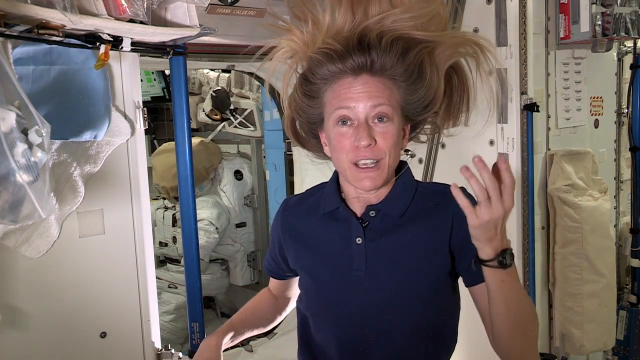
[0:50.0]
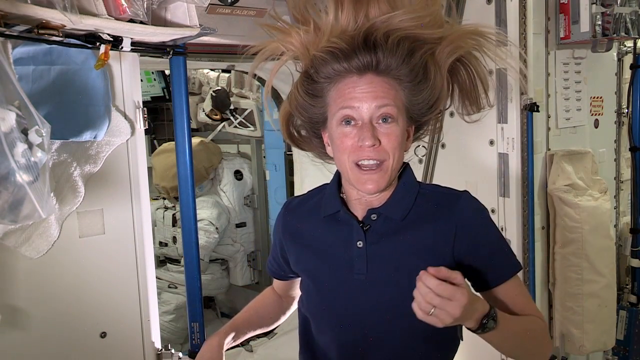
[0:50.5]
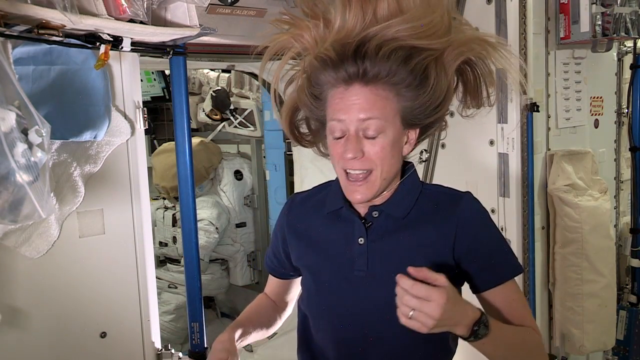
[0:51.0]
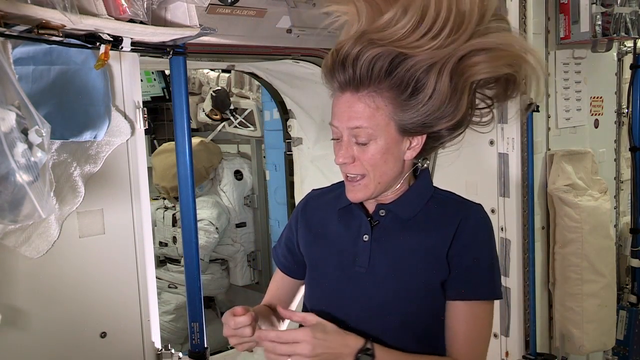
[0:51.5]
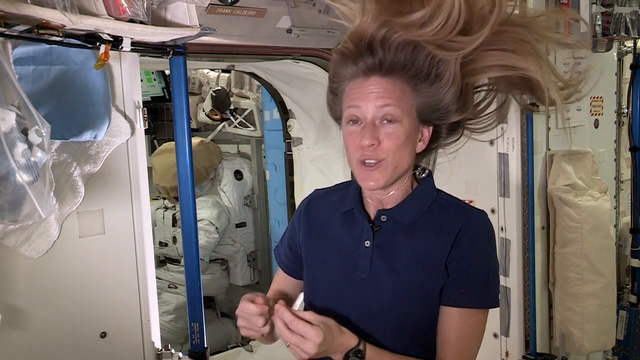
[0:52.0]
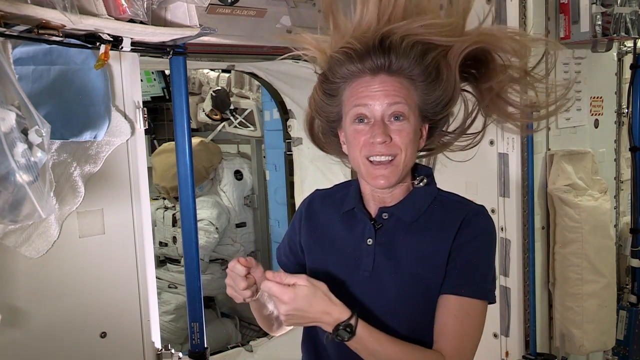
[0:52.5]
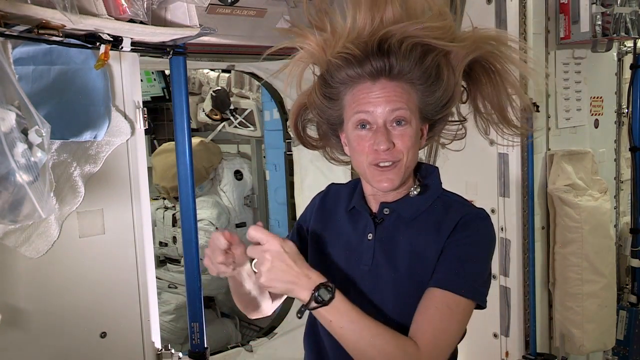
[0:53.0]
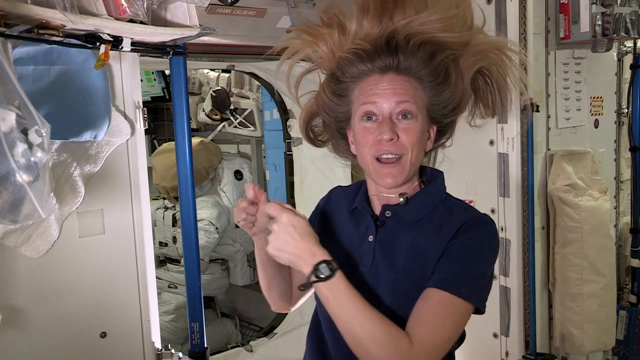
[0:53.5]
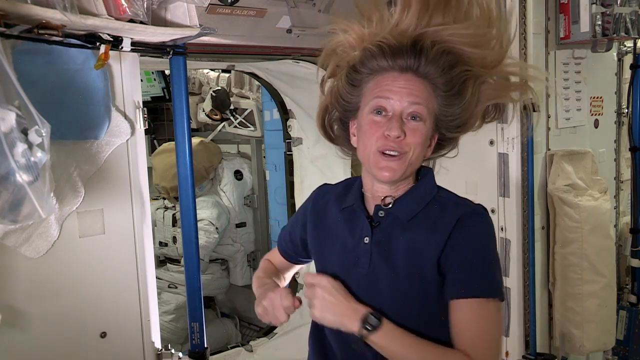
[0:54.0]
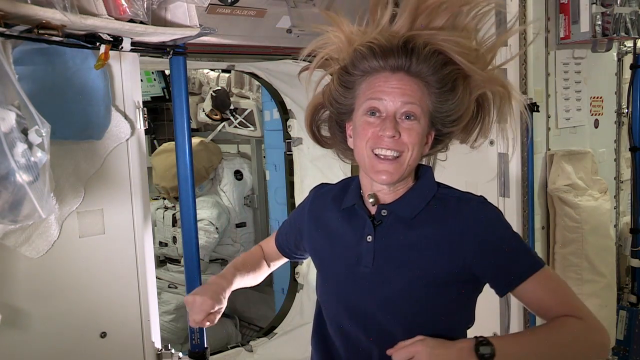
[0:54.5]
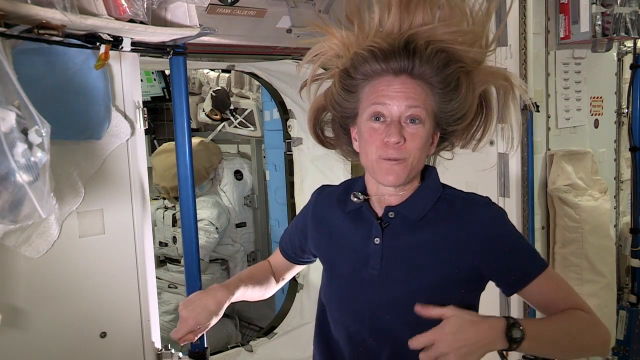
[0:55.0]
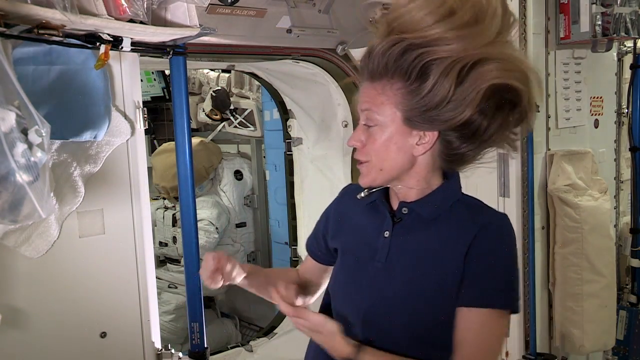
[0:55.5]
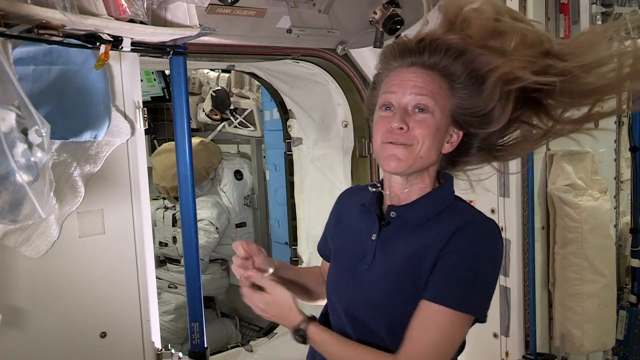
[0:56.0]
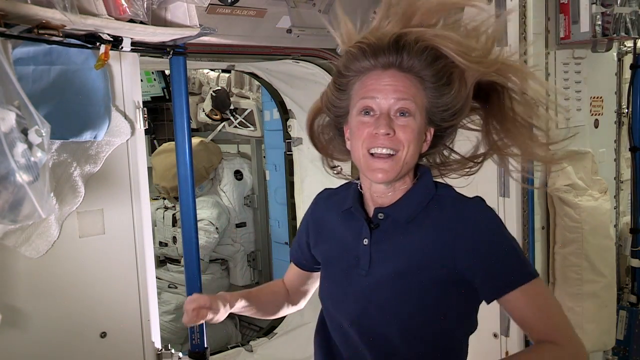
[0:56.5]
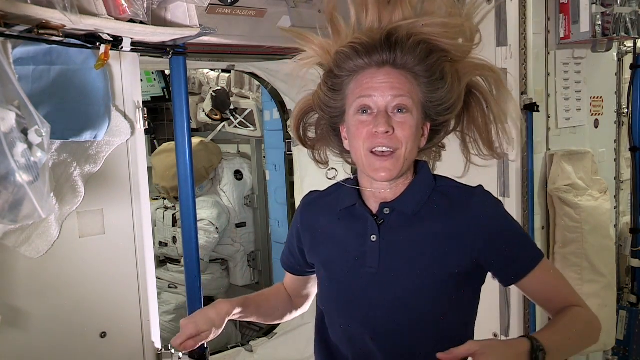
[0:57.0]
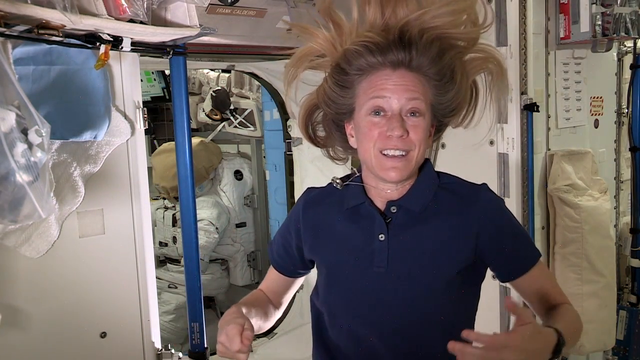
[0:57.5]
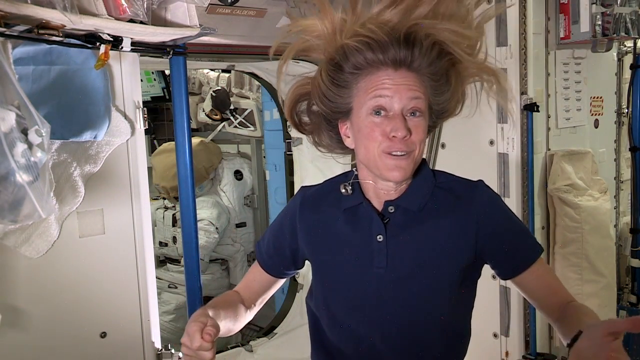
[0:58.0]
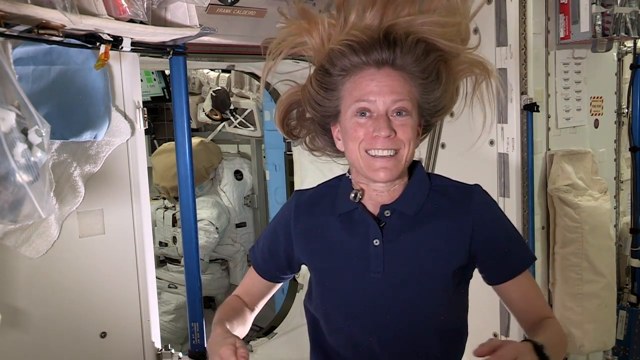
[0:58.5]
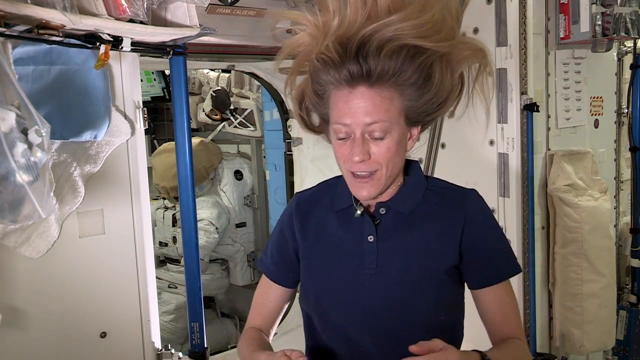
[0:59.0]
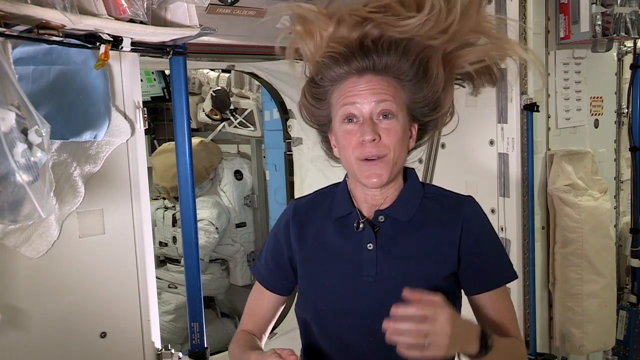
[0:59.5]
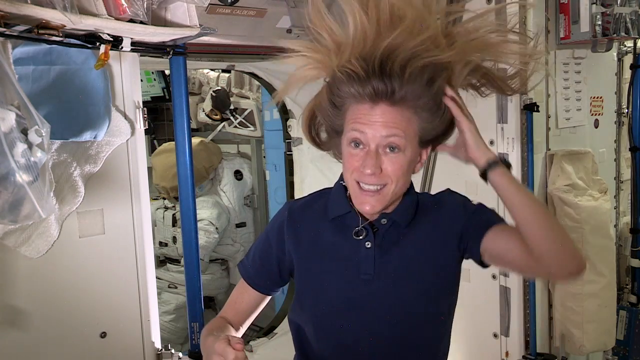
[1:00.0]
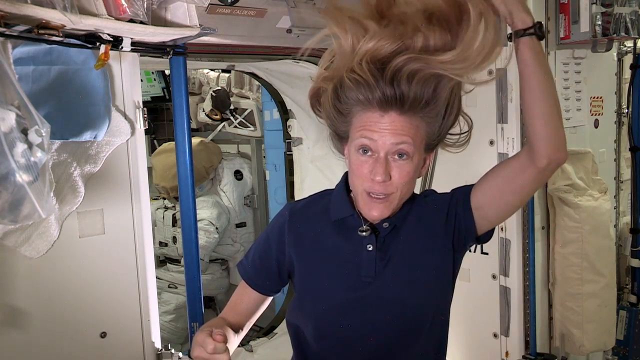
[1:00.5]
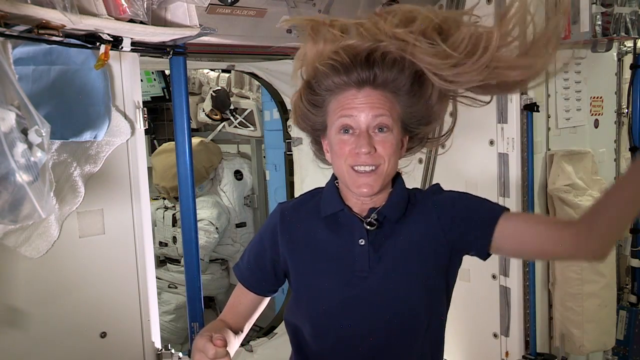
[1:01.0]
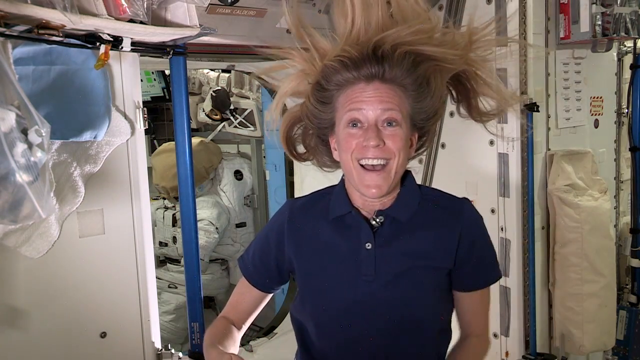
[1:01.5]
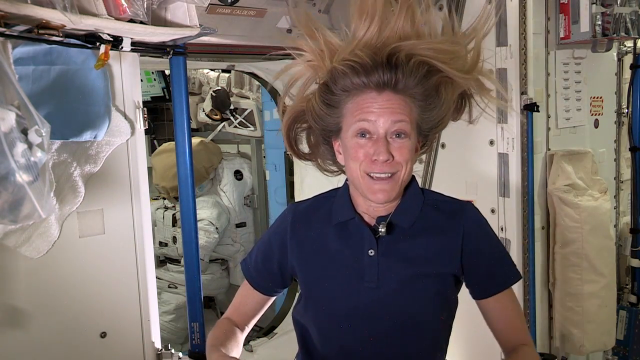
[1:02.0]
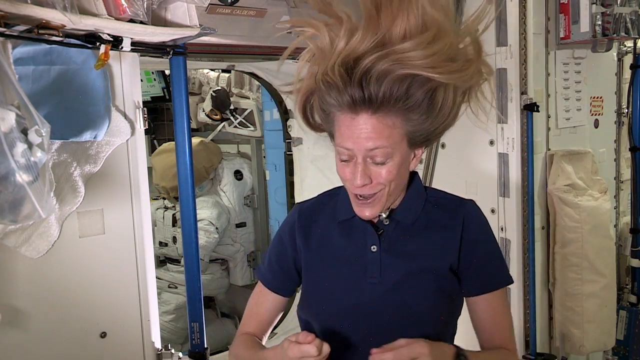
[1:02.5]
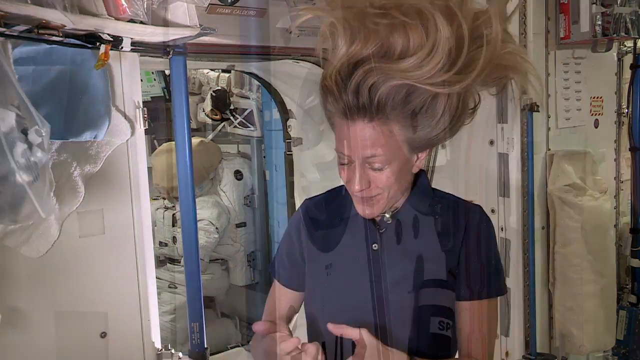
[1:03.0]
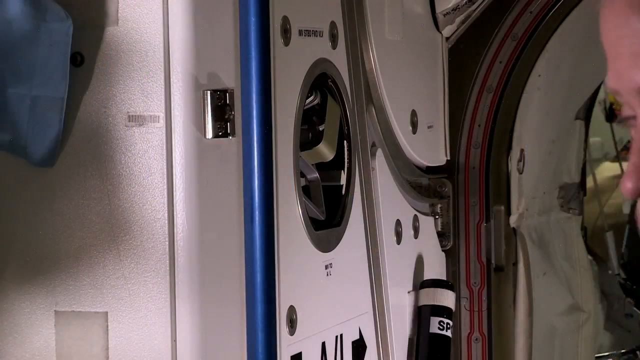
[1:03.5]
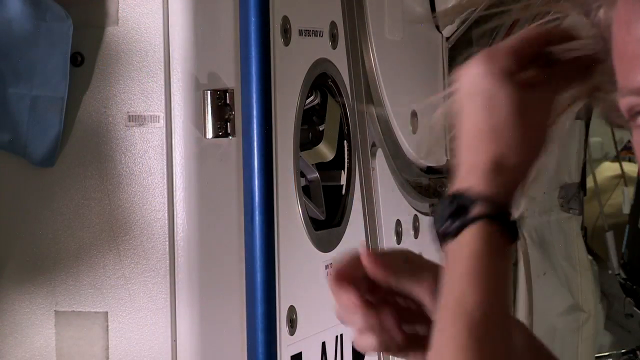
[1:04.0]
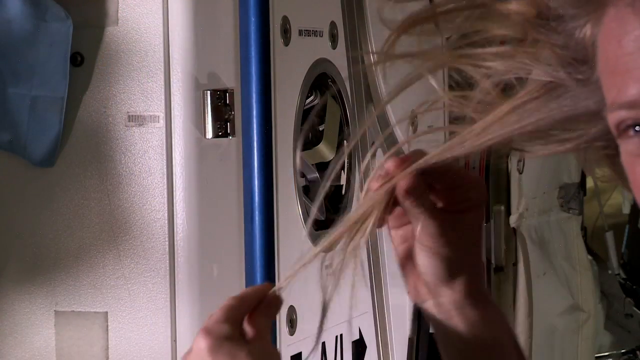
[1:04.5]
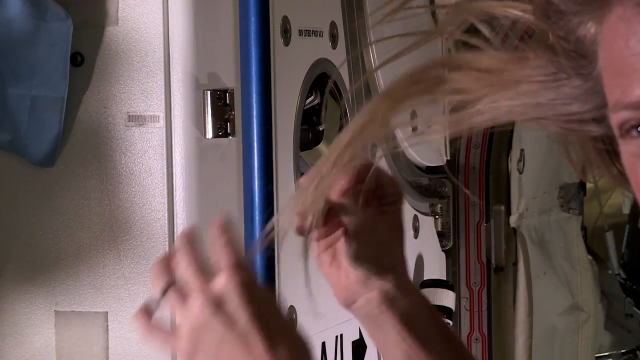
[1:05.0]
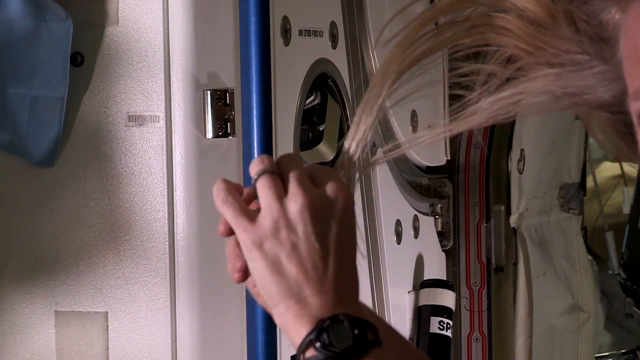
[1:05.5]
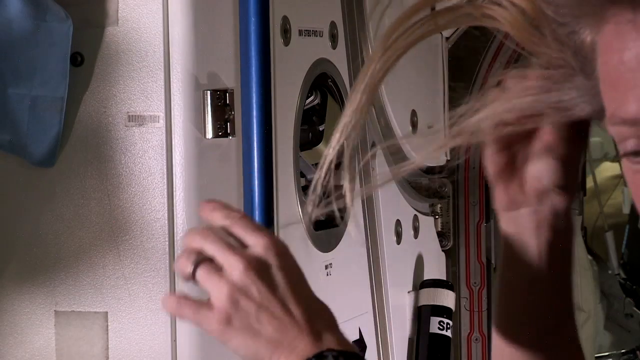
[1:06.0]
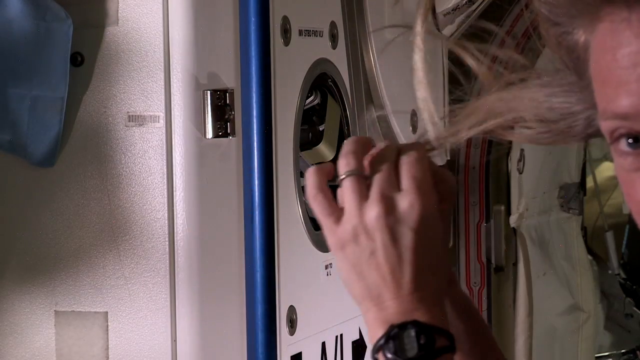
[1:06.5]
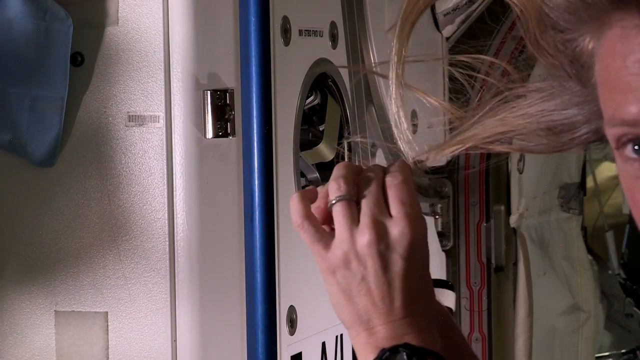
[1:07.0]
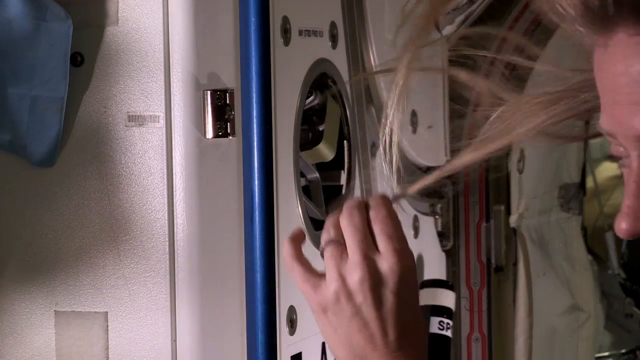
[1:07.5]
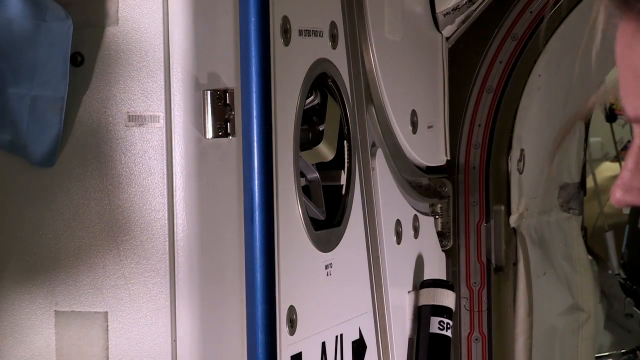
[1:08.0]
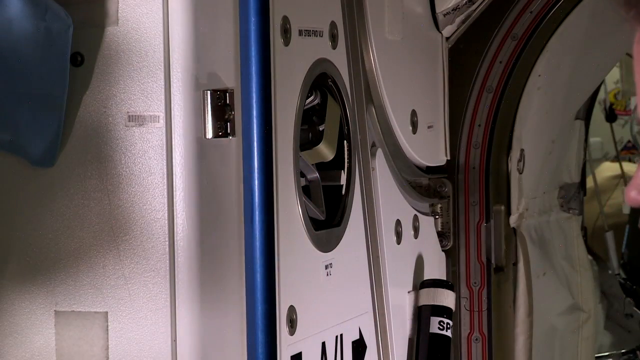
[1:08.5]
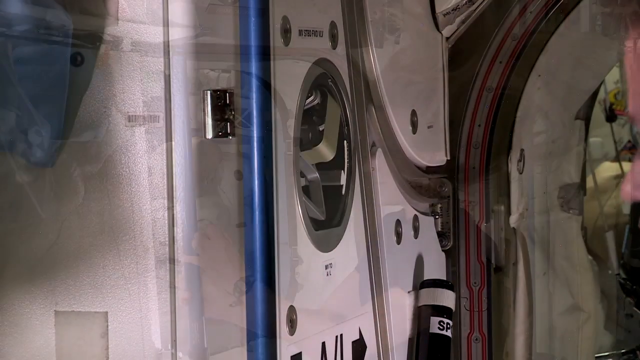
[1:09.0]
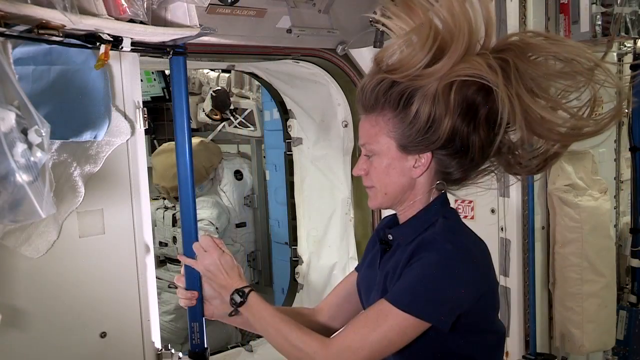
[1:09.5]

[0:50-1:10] The blonde astronaut is in the center with her hair floating up above her and her right hand out in front of her, the back of the hand toward the camera, showing a ring on her ring finger and a black watch. She looks straight ahead as she talks, her necklace floating up by her ear. She brings both hands over to her left side and looks down at them, kind of acting as if grabbing something though nothing is in her hand, moves it out a little, looks back toward the camera while still shaking it, brings her hands back down, goes back out to the side, and turns her head to the left. As she turns her head left, her floating hair moves to the right side. She looks back at the camera smiling big, looks down, brings her hand up to her hair and kind of strokes through it, showing how it floats around, then starts laughing hard. The video cuts to a shot where the side of her forehead is just barely visible in the top right corner, with her hair coming out from there as she grabs hold of it and pulls it to make it look like it's floating. She alternates hands, pulling it with her left and then her right straight off to the left, and it kind of sticks out a little because there is no gravity. Her eye looks down and then forward. She turns to the left so her nose is visible, and the video cuts to a wide shot: she is still looking left, hands out in front of her, hair floating behind her.